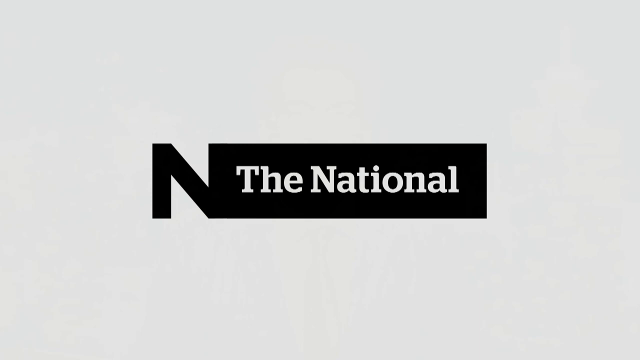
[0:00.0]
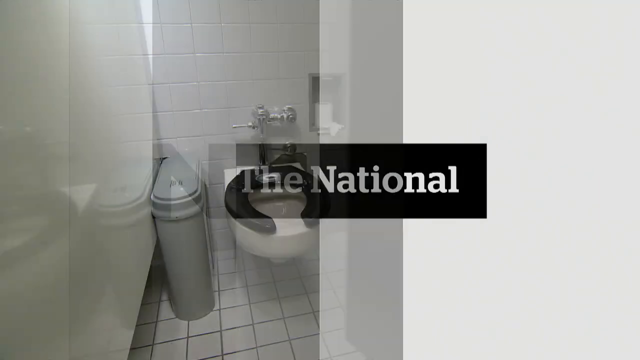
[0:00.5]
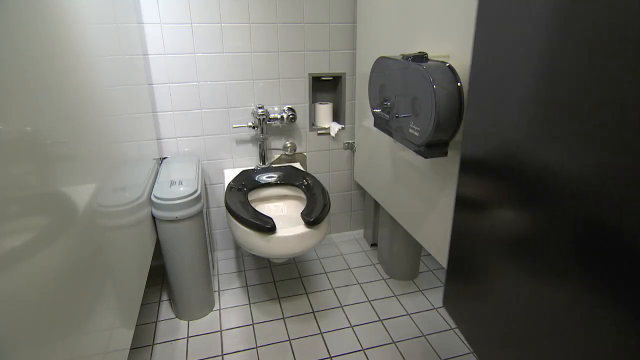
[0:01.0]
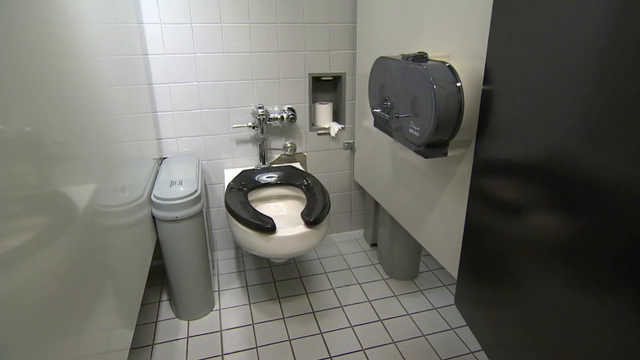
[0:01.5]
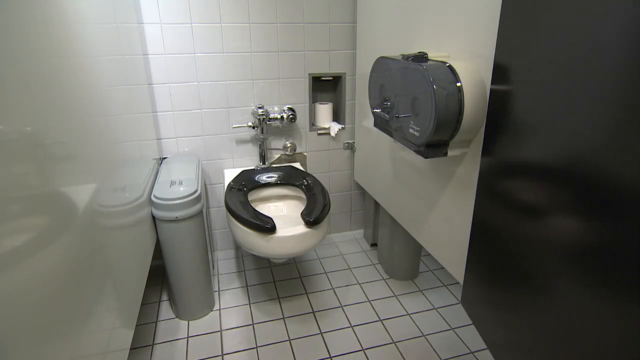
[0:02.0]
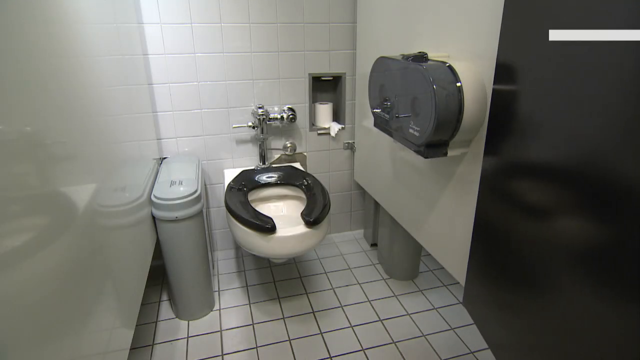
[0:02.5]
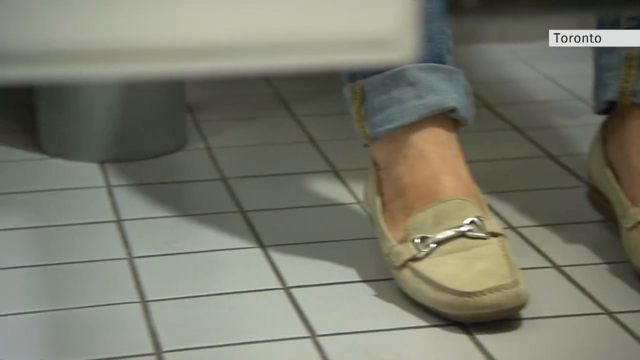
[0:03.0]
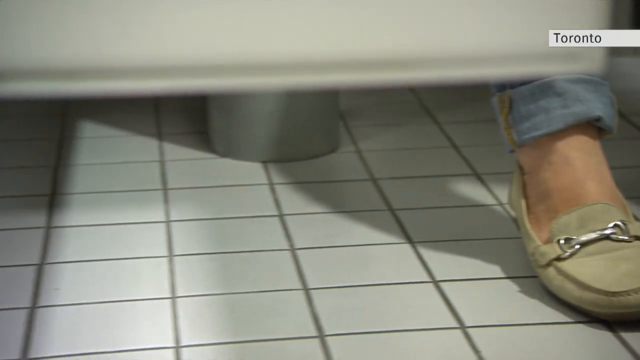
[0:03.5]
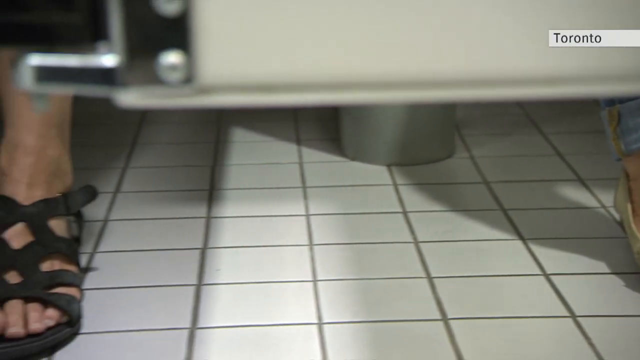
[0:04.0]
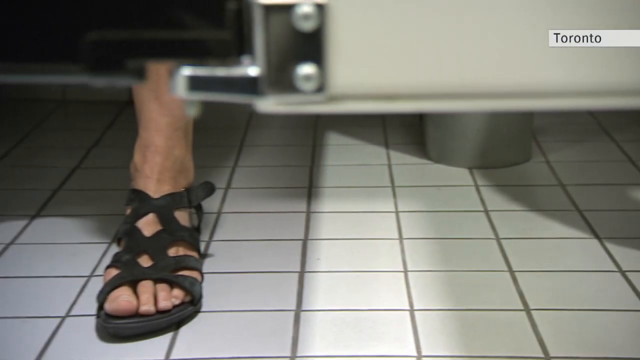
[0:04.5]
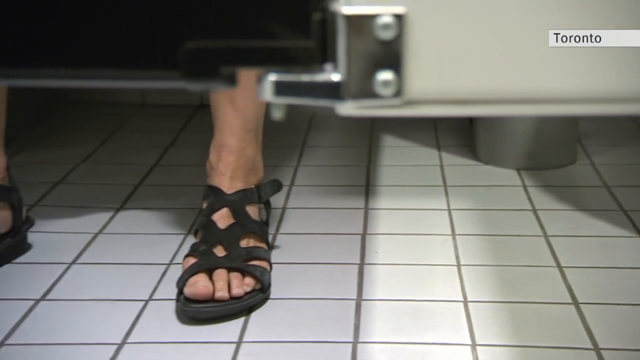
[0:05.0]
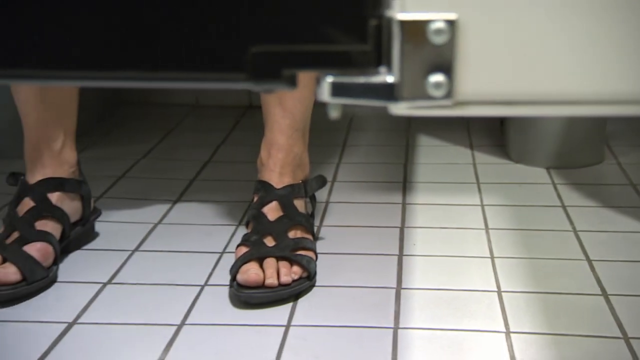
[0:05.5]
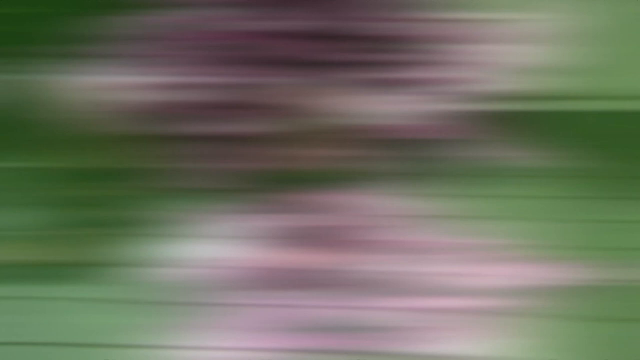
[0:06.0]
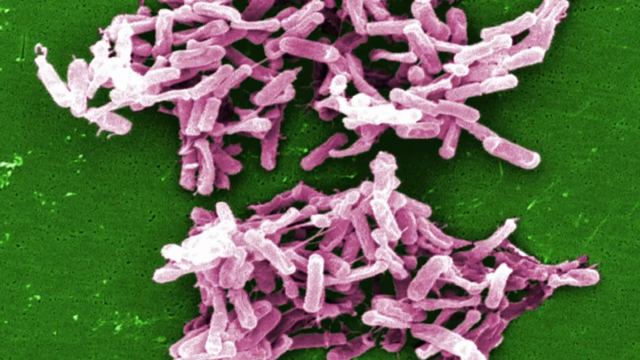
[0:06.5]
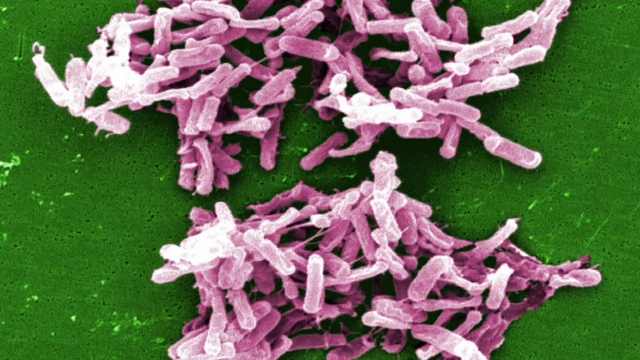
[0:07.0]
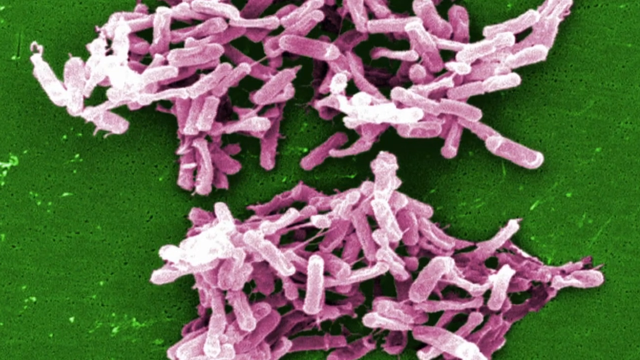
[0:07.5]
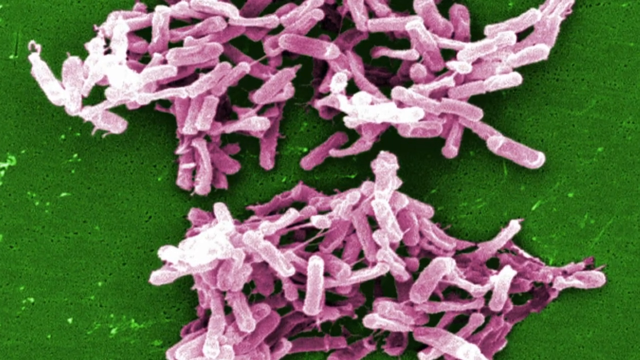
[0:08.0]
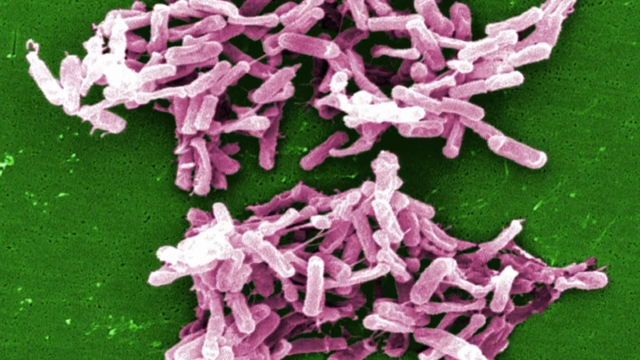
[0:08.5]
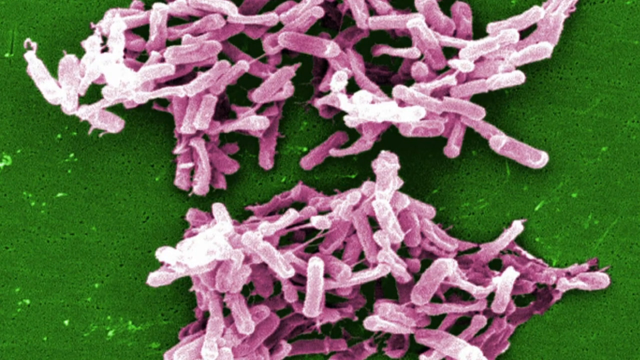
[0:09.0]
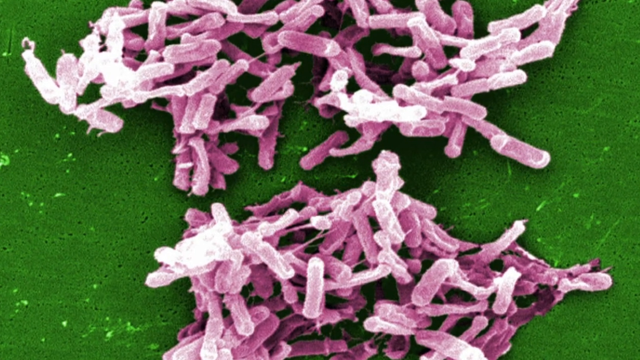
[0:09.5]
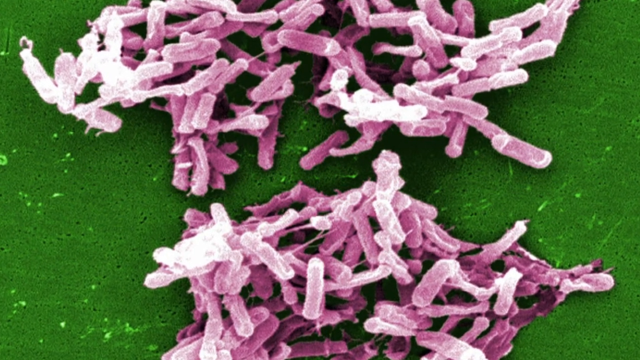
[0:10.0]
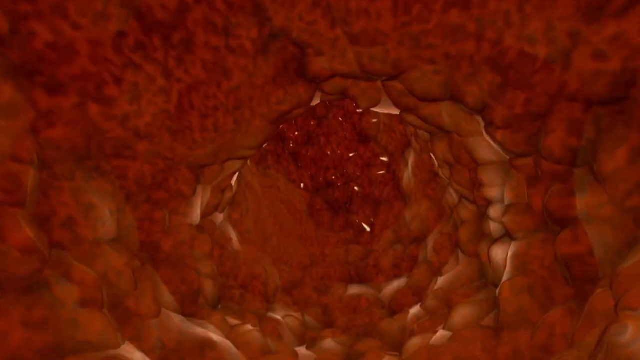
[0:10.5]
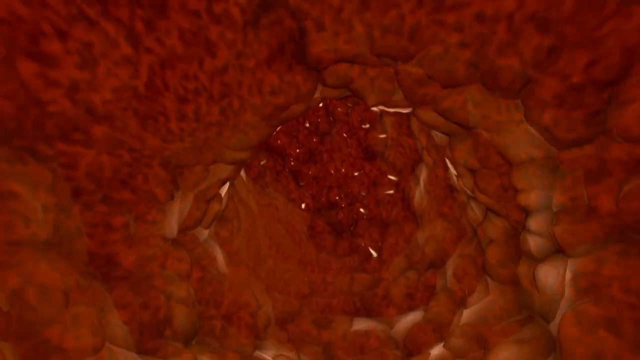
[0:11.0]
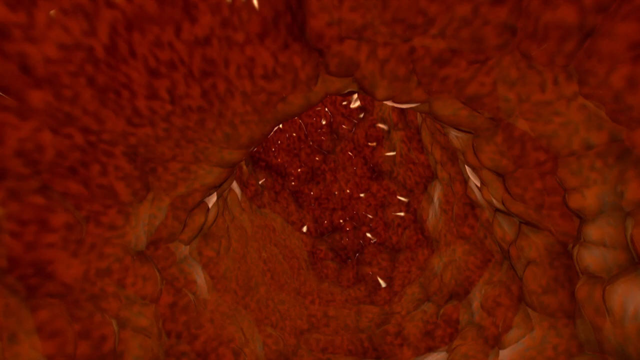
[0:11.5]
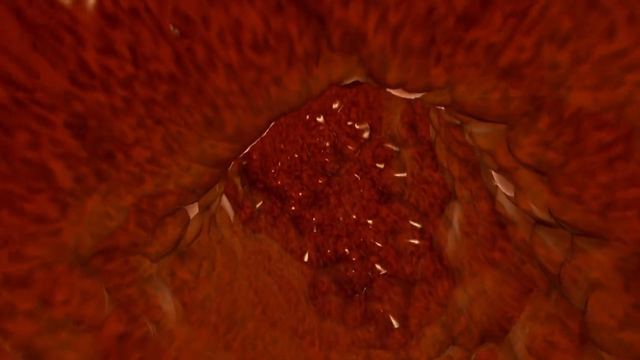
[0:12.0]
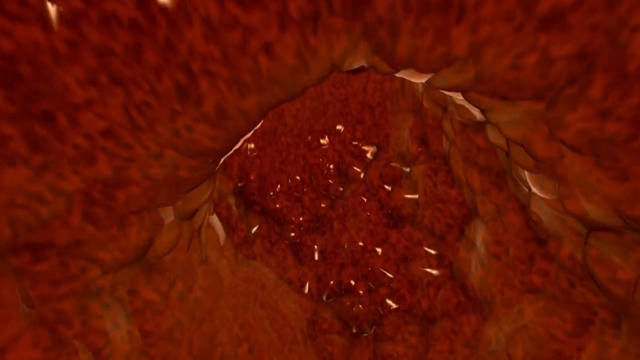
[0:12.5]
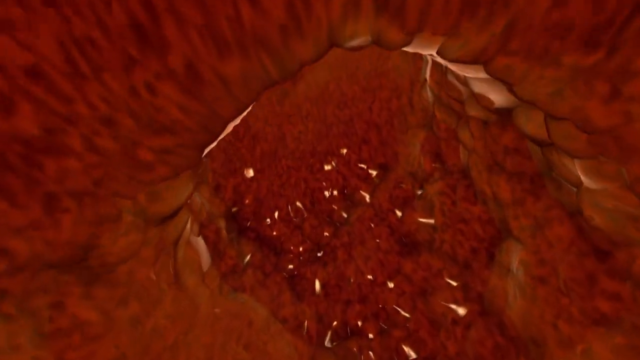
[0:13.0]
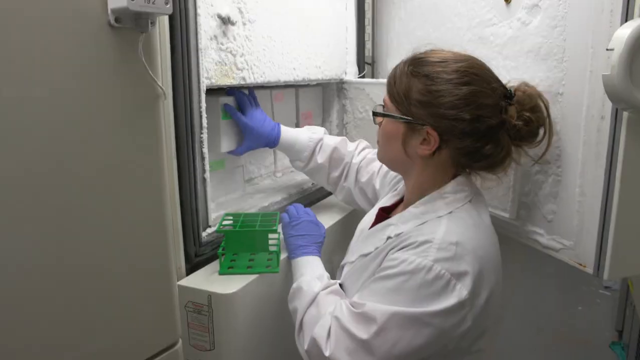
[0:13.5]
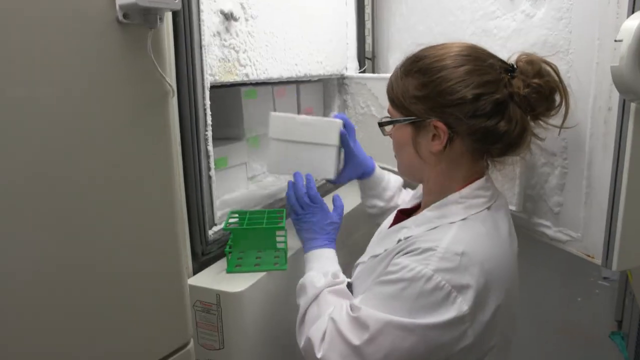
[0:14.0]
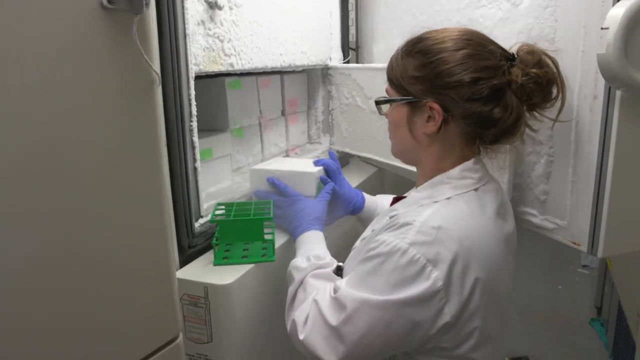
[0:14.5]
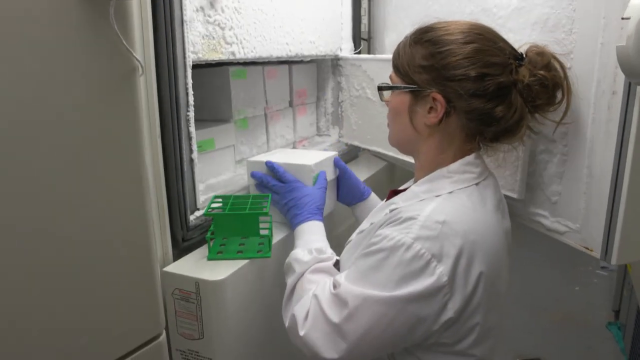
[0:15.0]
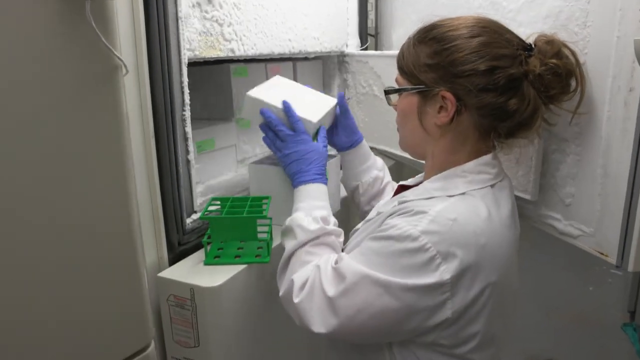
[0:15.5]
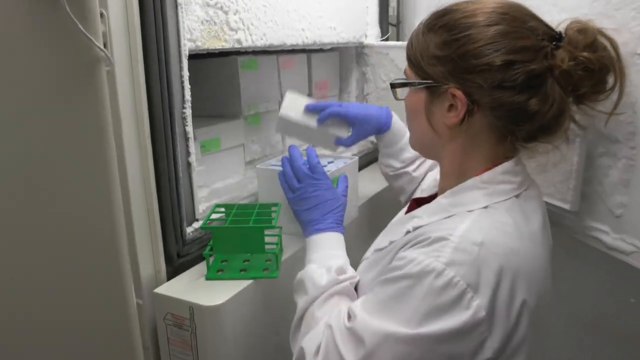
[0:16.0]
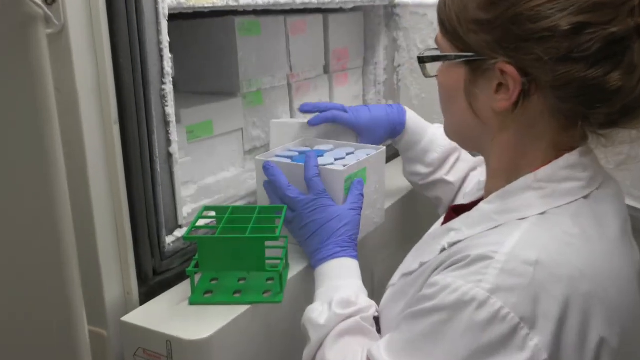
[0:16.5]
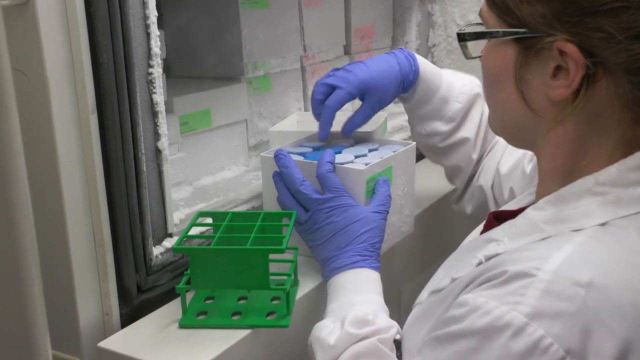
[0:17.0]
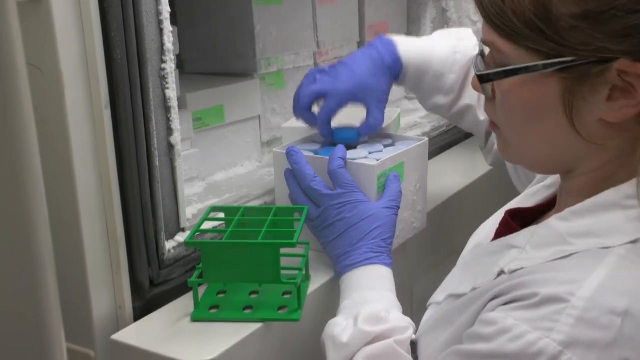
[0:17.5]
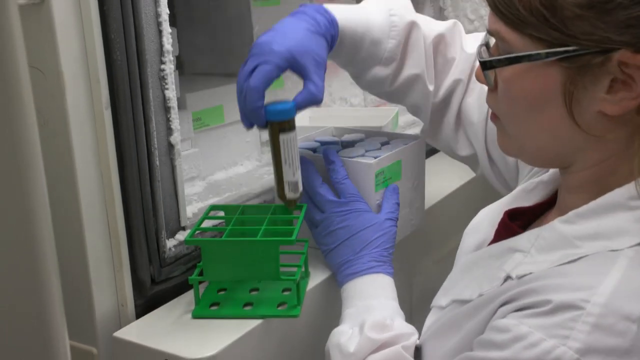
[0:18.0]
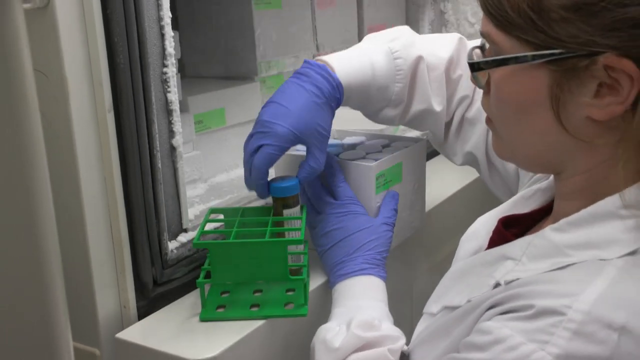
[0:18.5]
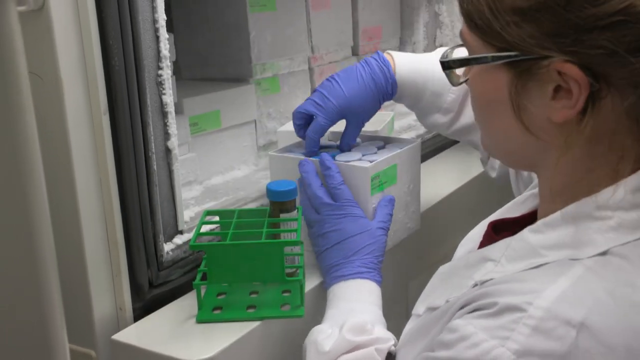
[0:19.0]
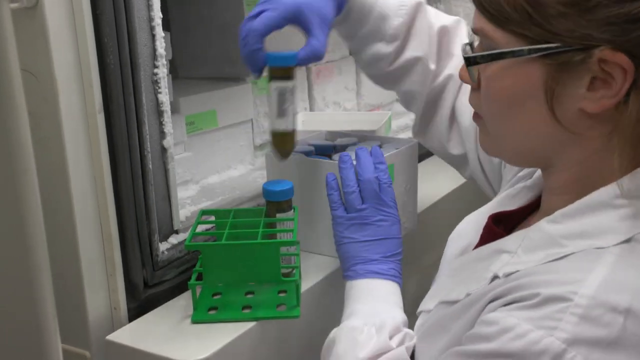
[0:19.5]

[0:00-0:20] The video begins on a white screen with a black rectangular logo; an N adjoins the left side of the logo, emerging into it, and white text inside the box reads "The National". The scene opens in a bathroom stall: a toilet roll holder is on the right, a little grey gap in the wall holds a toilet roll, the white-tiled floor has black lines, and the cubicle is white, with a white toilet with a black lid, a silver flushing system, and a sanitary bin to the left of the toilet. The black stall door is open and wiggles slightly left to right. Next come shots of different women's feet as they use the cubicles; the cubicle doors are closed, and only the bottom part is visible, focusing on their feet on the tiles inside the stalls. A green background then appears with pink bacteria clustered together at the top and bottom of the screen as the camera slowly pans in closer and closer. This is followed by what looks like an animated shot of the inside of a person, showing the red inner walls of some organ. Then a doctor appears, wearing white overalls, blue gloves and glasses, with brown hair tied up in a bun. Side-on to the camera, she reaches into what looks like a large refrigerated unit and pulls out a large white case. She takes the lid off; inside are a number of tubes with blue lids, each holding a brownish-green substance, and she takes them out one by one and moves them to a green crate next to her.